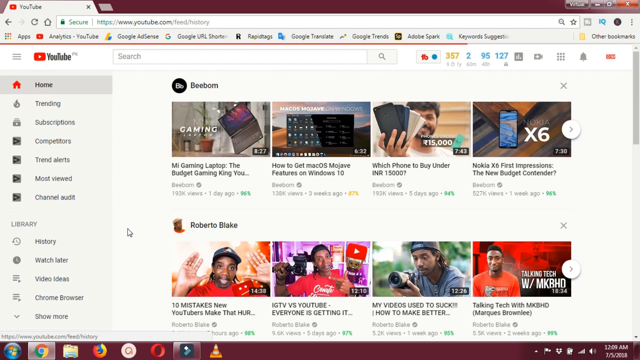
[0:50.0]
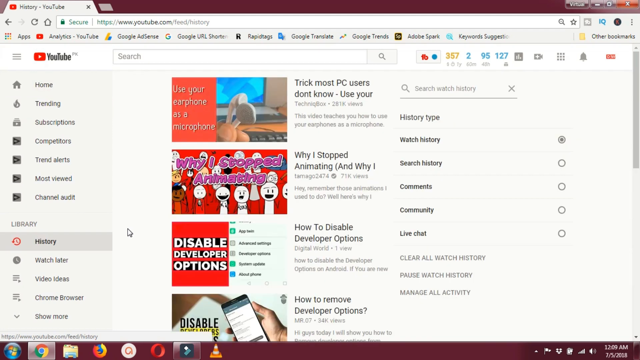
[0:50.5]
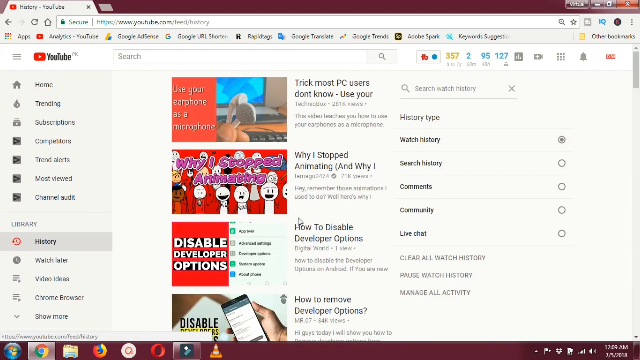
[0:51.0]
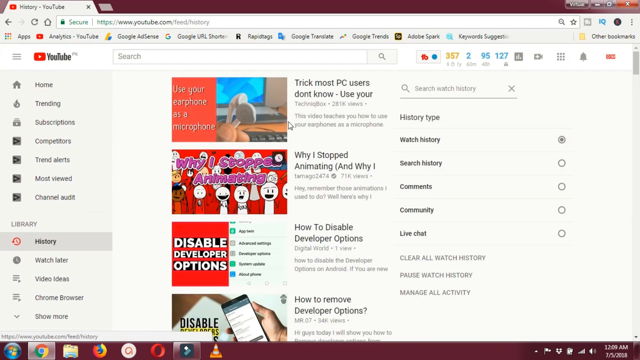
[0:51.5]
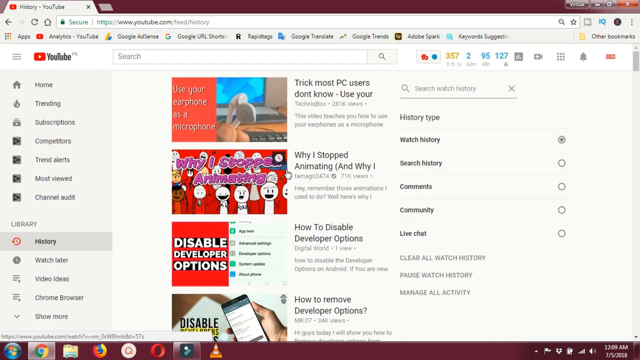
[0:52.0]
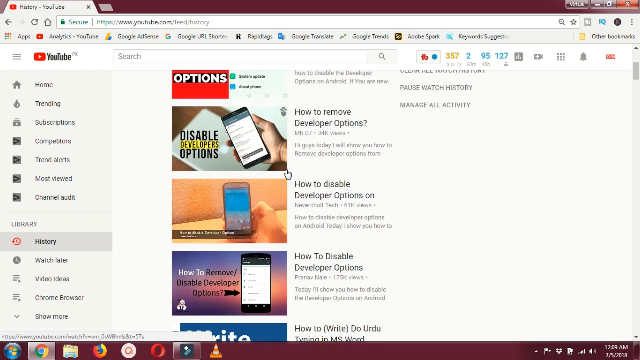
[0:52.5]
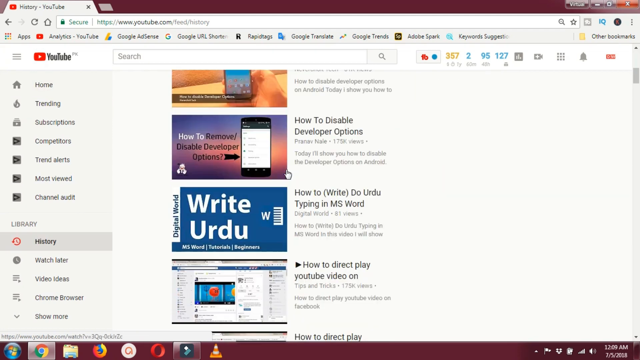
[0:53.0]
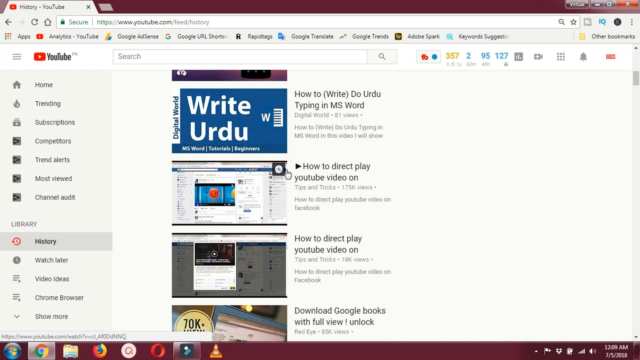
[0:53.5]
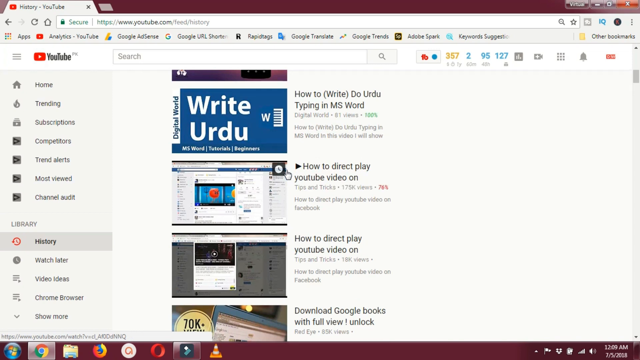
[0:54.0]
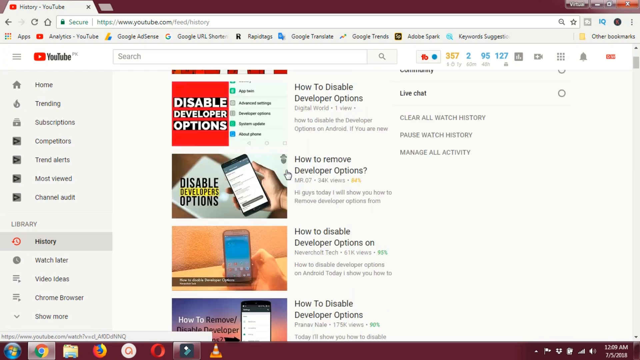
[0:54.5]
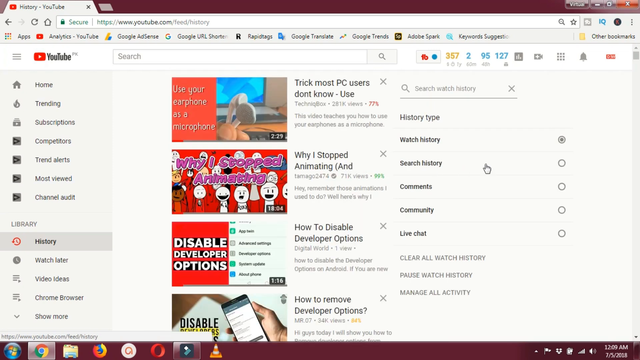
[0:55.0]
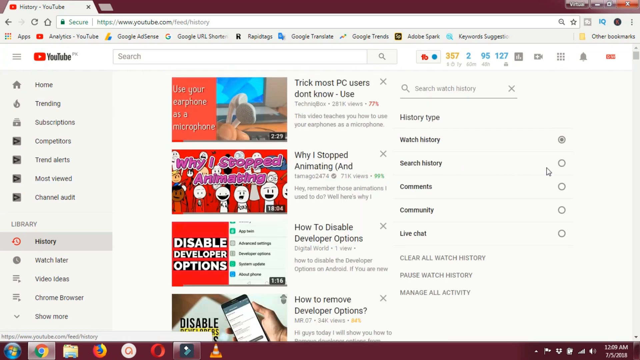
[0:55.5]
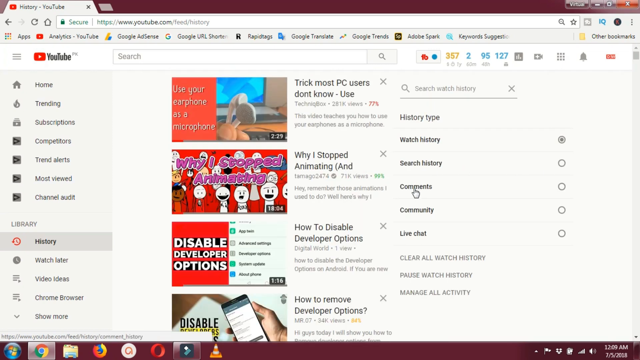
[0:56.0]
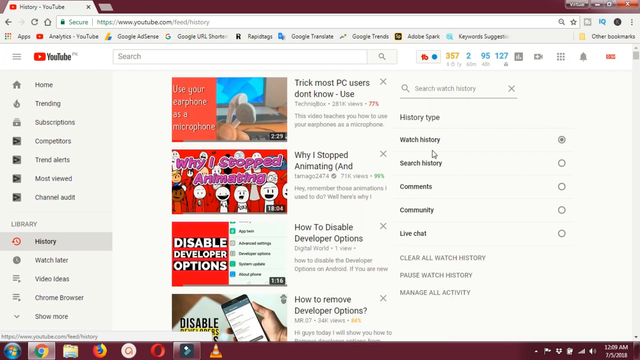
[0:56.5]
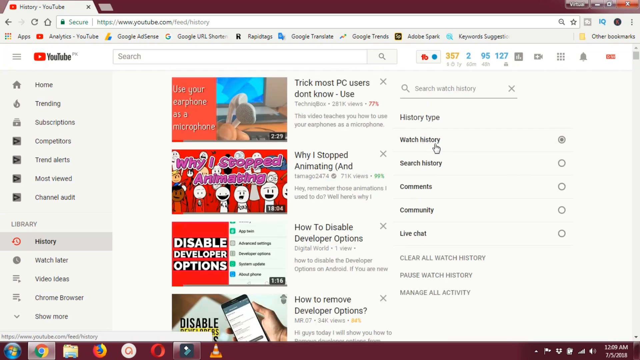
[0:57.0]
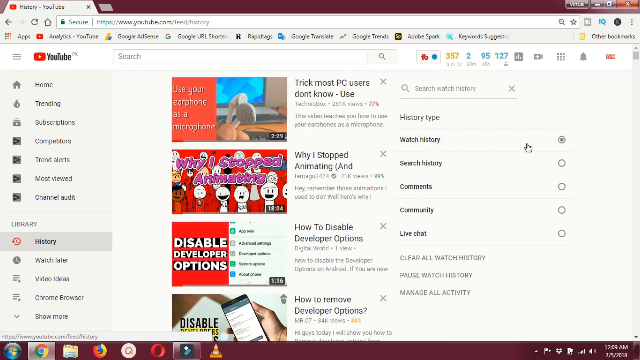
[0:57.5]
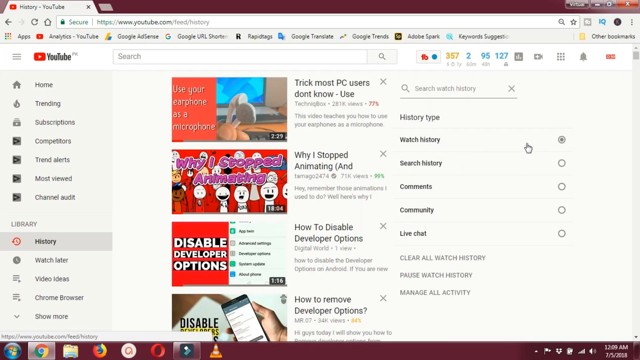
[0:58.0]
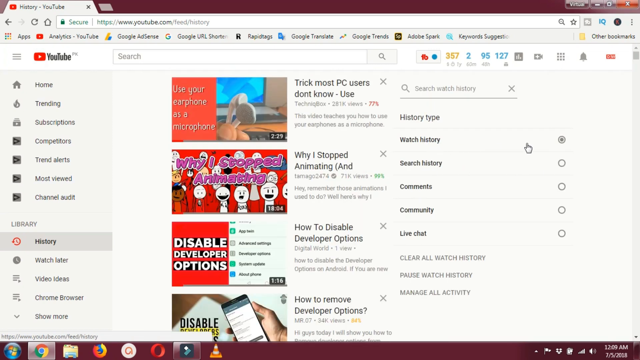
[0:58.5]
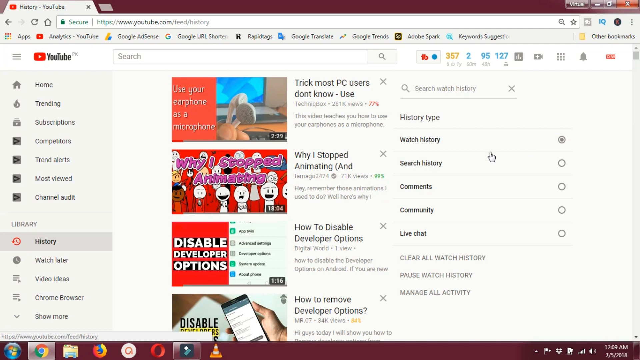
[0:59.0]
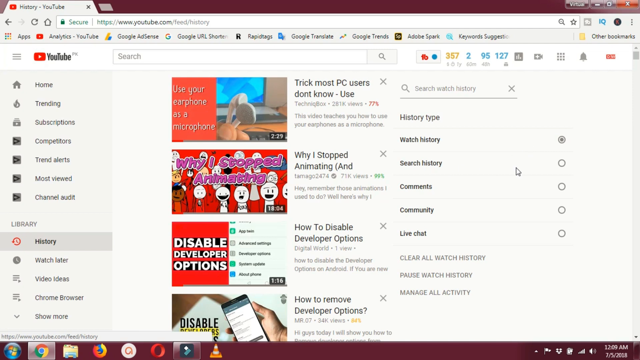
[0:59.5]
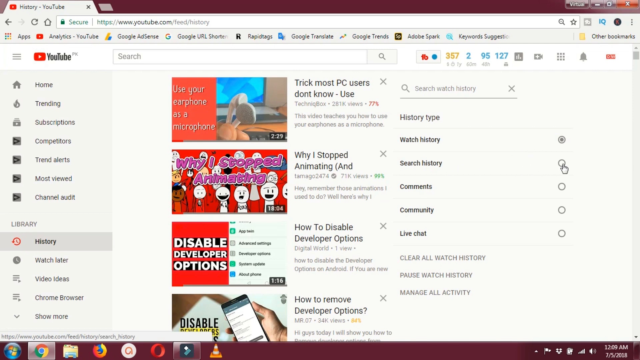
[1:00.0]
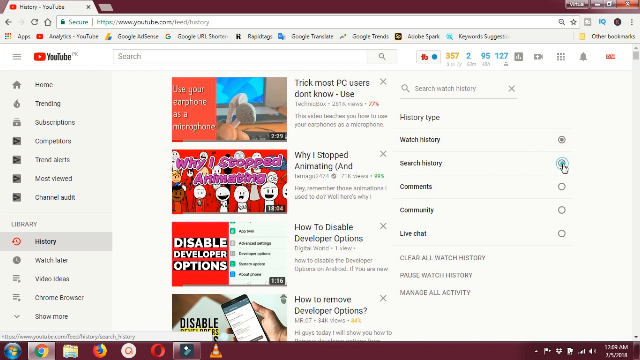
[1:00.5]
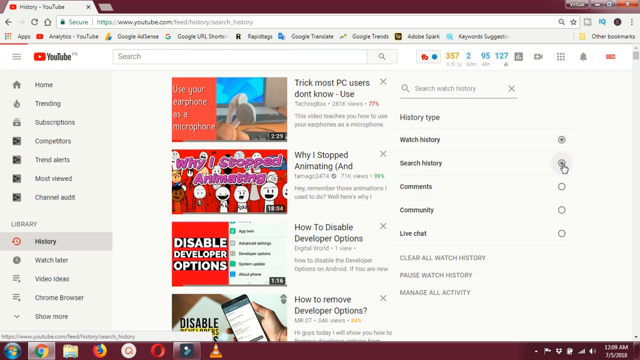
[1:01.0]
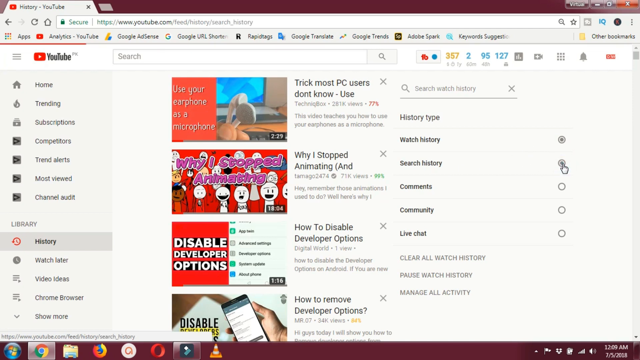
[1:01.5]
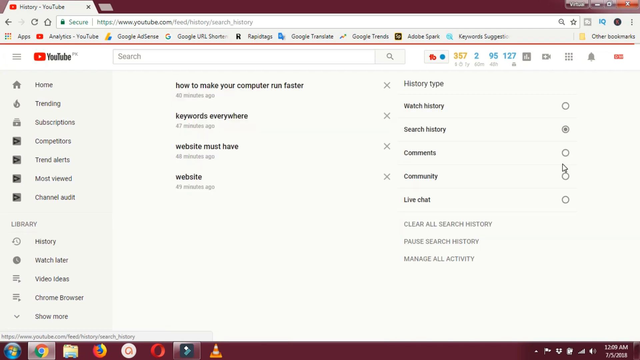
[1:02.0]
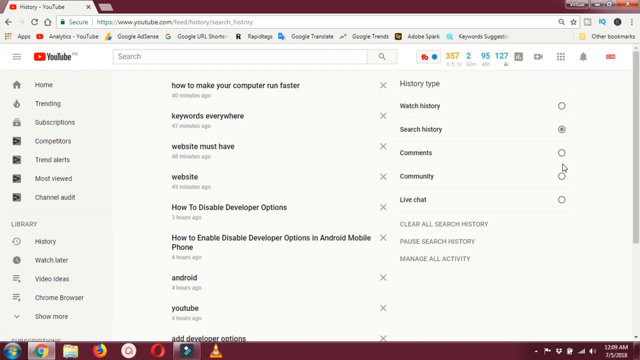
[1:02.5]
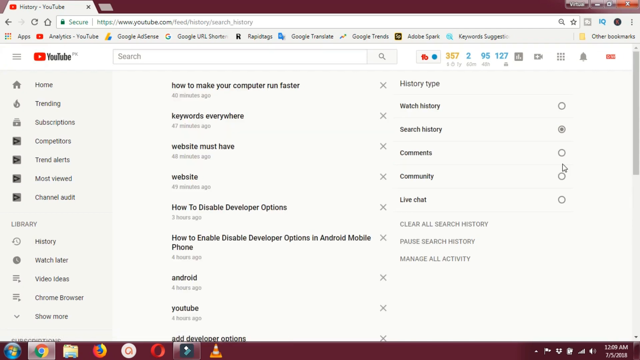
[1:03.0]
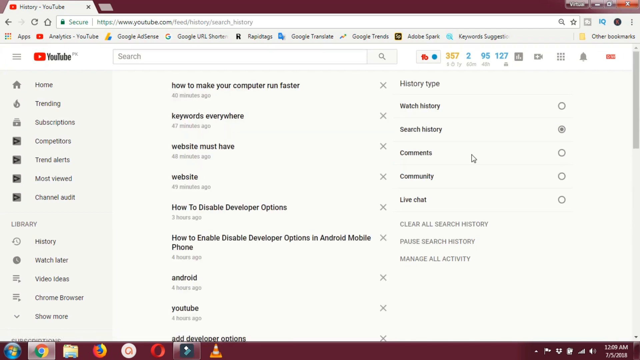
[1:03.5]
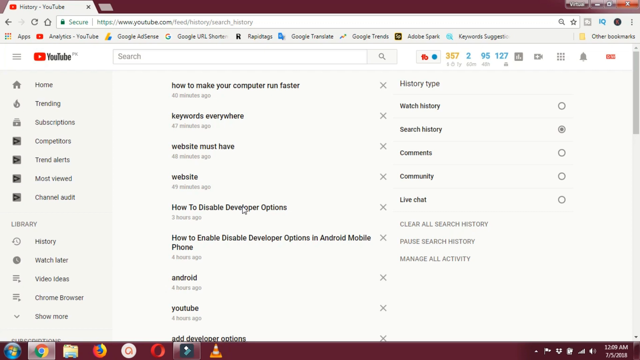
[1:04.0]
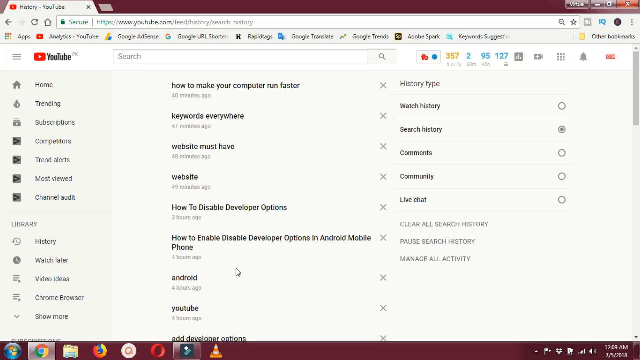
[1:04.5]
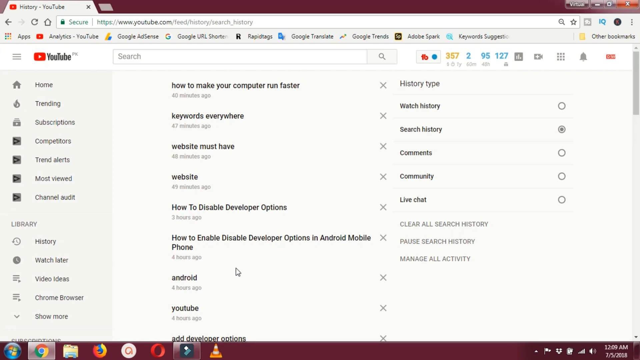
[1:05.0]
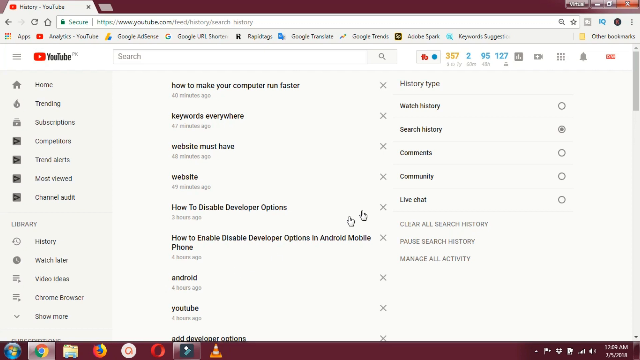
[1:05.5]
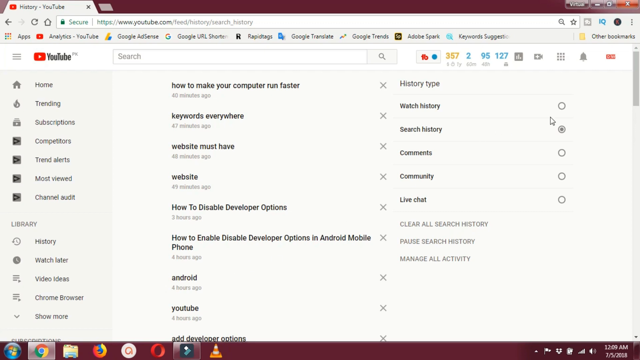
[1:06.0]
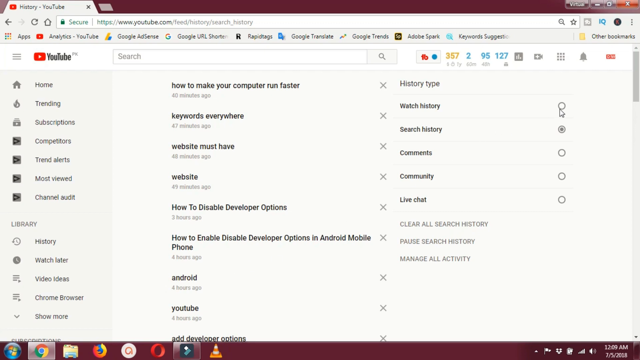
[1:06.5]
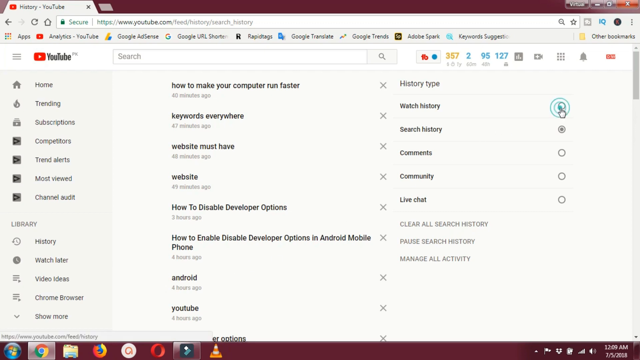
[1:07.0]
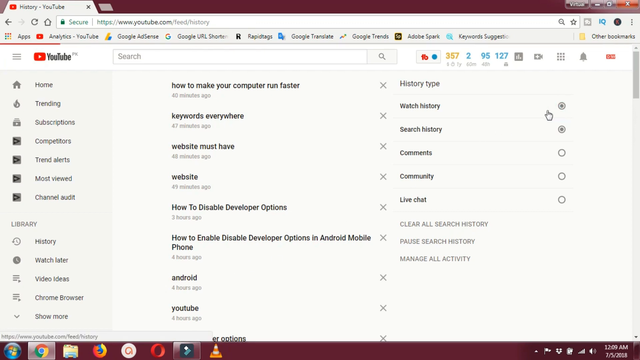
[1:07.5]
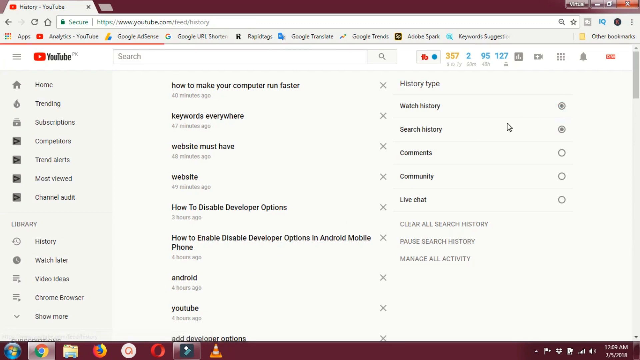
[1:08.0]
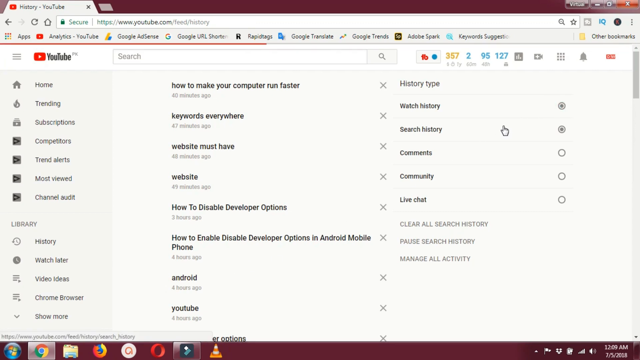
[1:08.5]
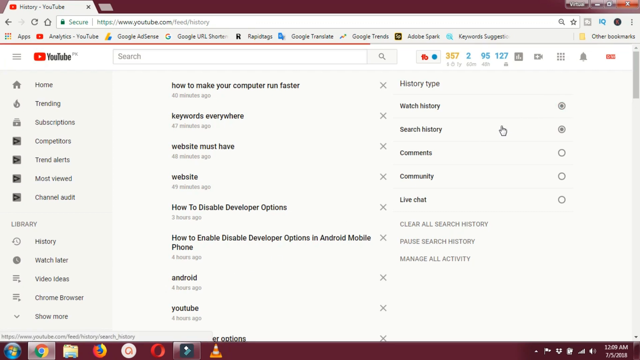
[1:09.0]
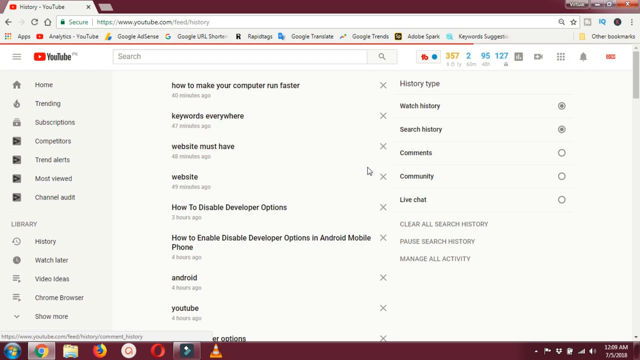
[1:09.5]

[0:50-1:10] In the history section, search history is selected and shows different entries, then watch history is selected, showing different videos. The view then goes back to the initial videos displayed before. No video is clicked or played; only thumbnails of videos are displayed on the YouTube page.